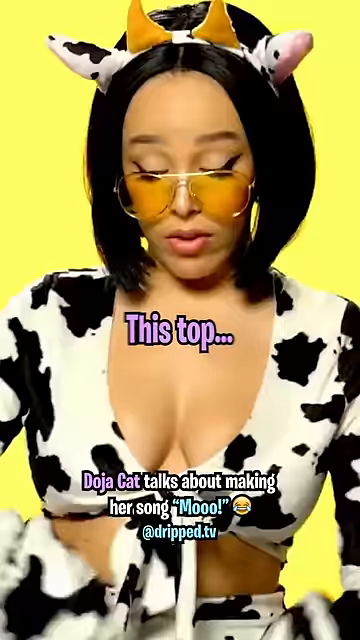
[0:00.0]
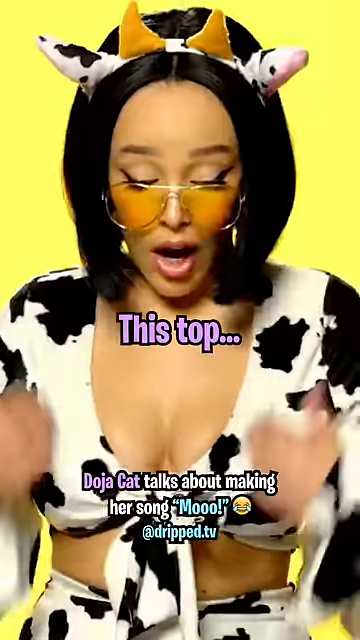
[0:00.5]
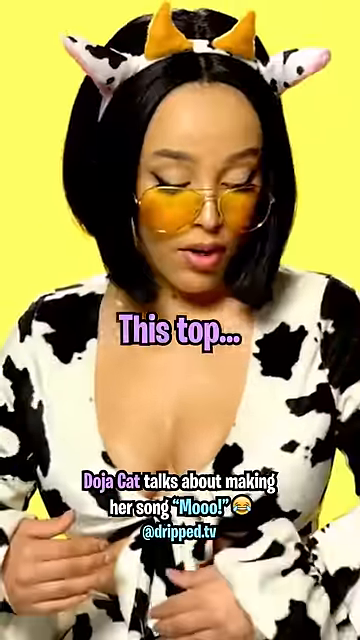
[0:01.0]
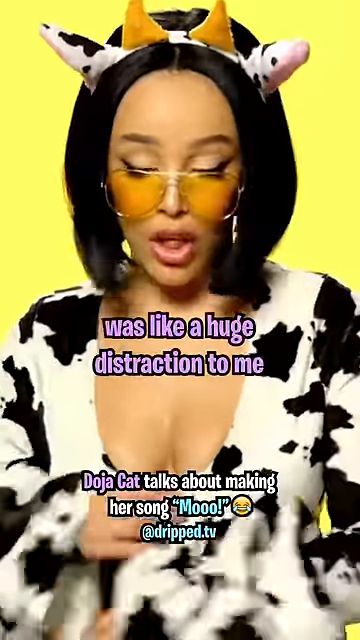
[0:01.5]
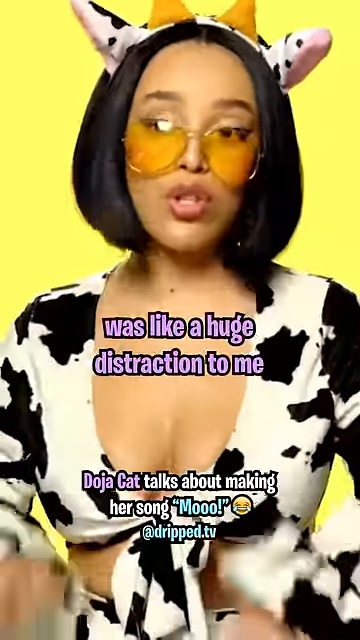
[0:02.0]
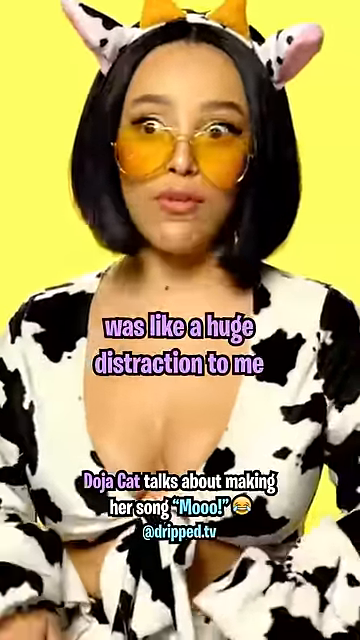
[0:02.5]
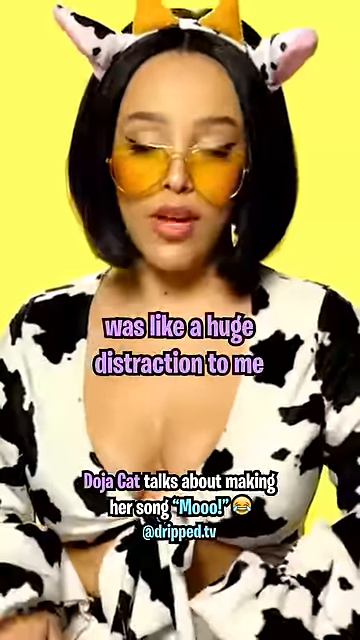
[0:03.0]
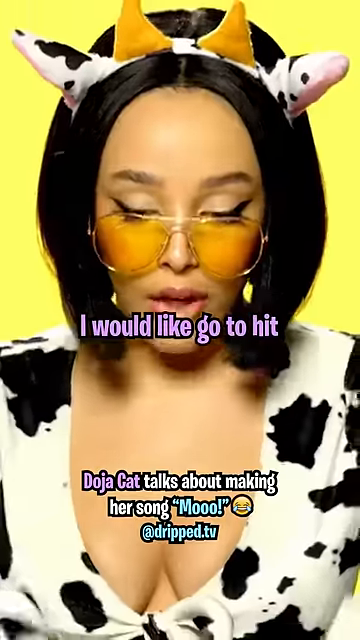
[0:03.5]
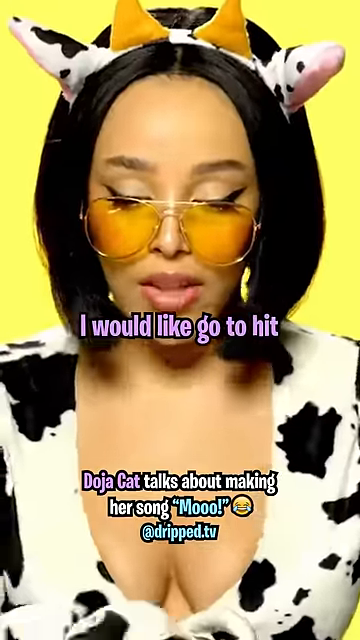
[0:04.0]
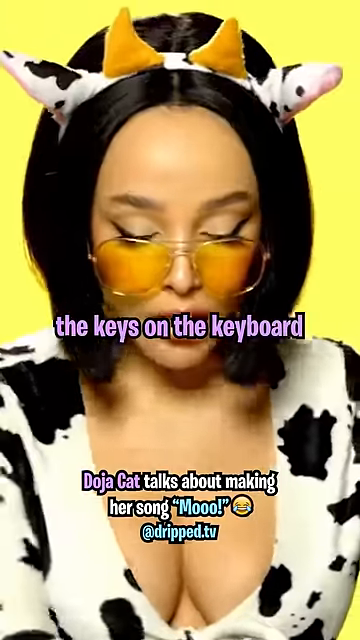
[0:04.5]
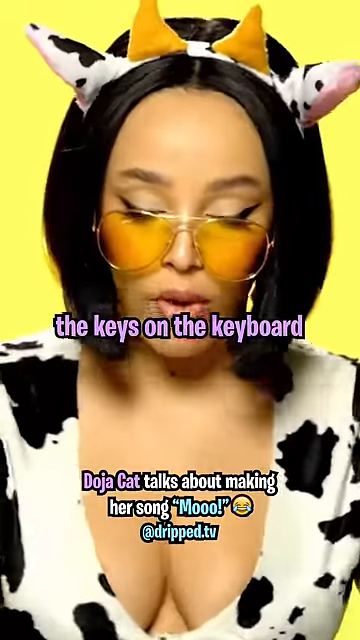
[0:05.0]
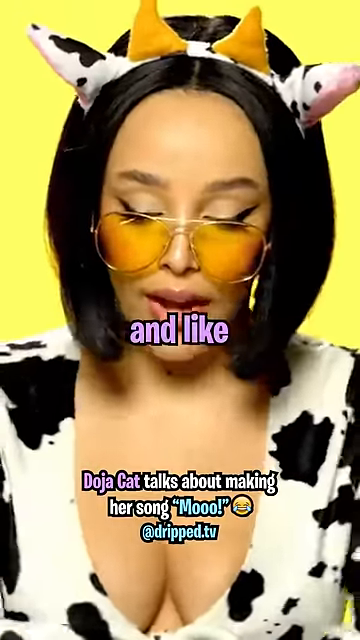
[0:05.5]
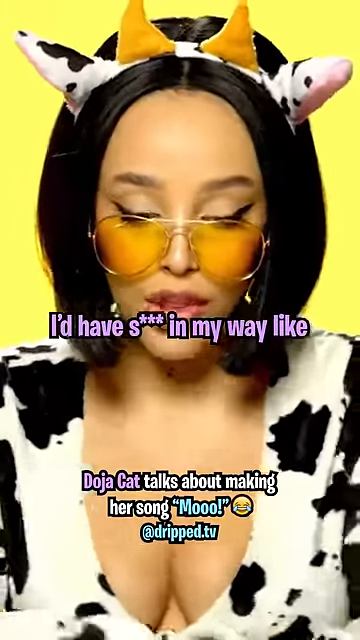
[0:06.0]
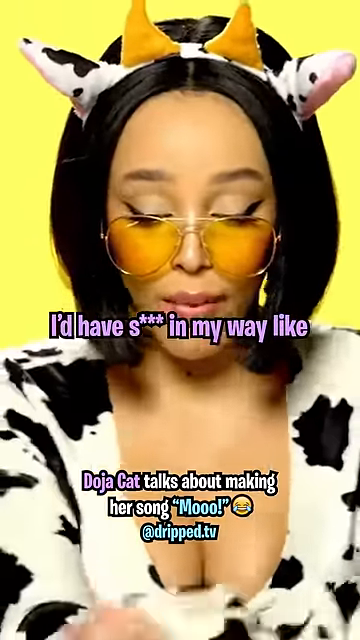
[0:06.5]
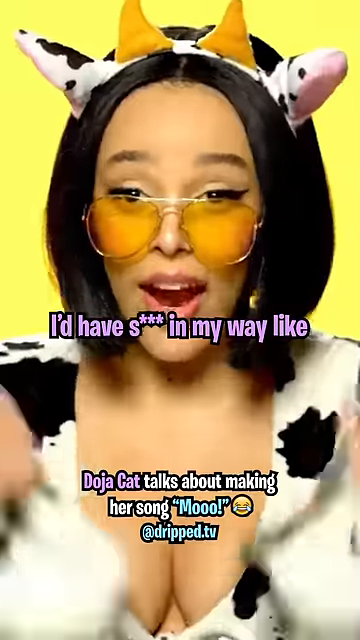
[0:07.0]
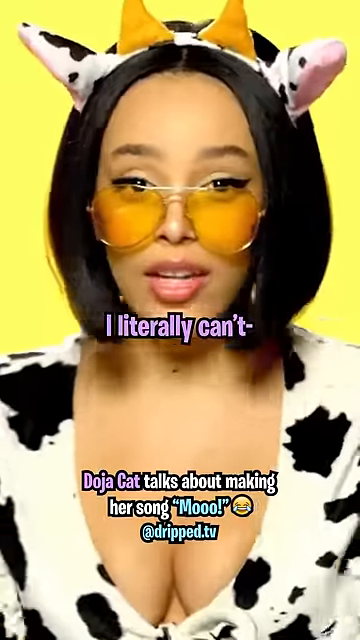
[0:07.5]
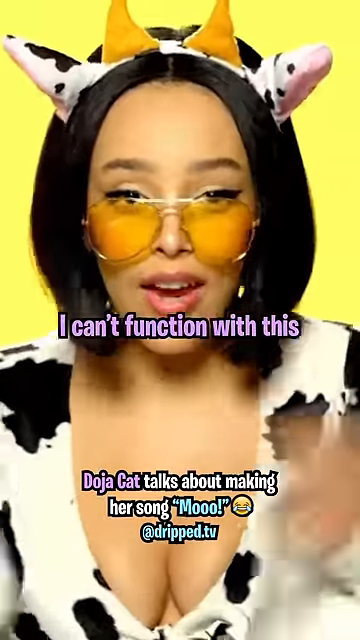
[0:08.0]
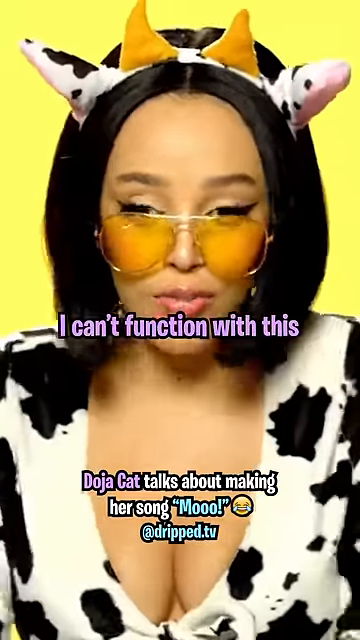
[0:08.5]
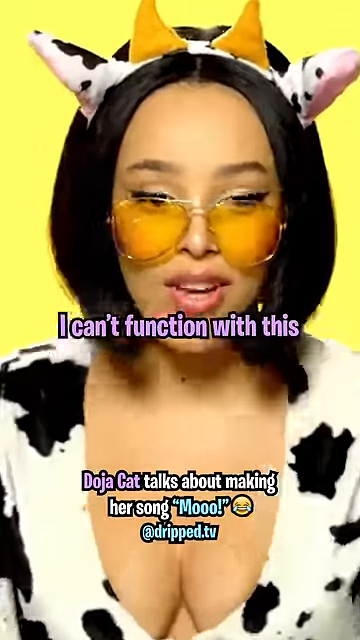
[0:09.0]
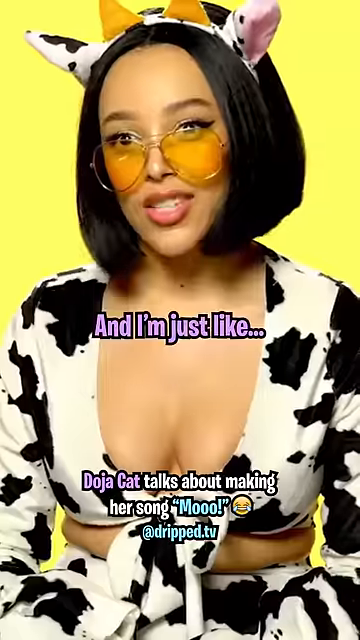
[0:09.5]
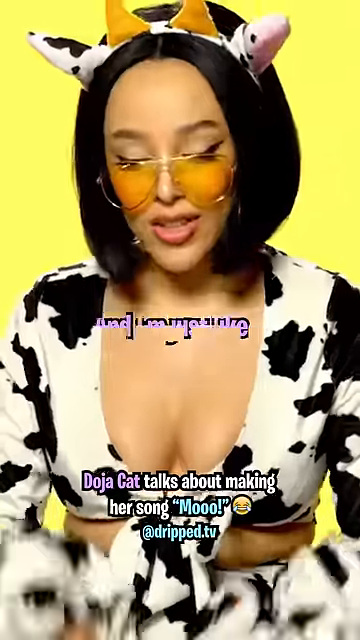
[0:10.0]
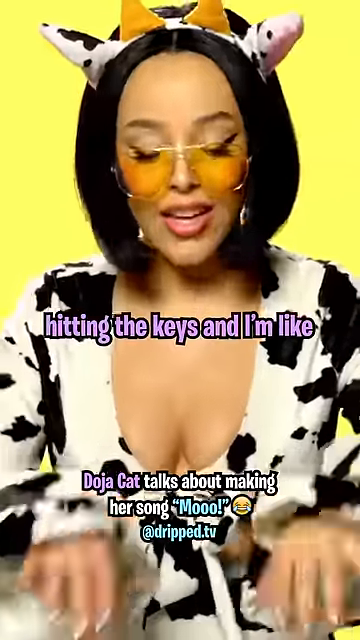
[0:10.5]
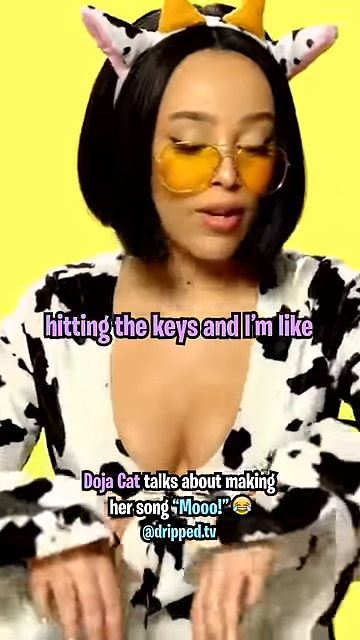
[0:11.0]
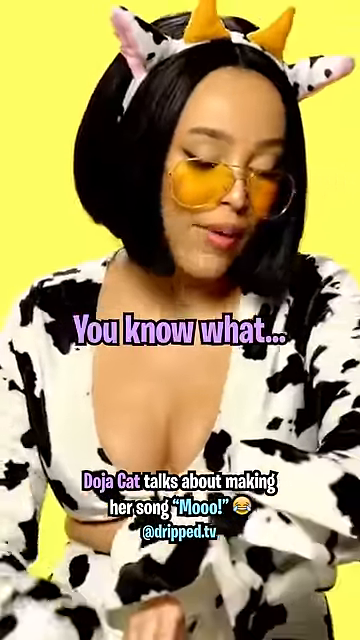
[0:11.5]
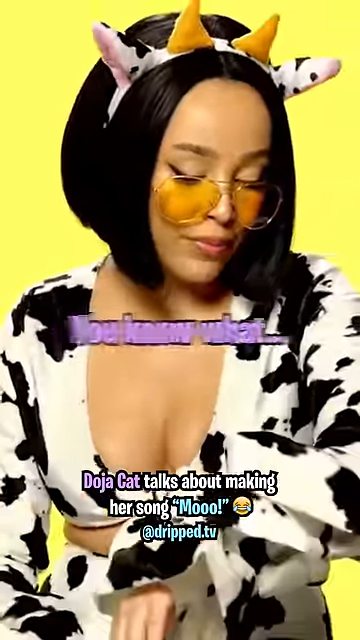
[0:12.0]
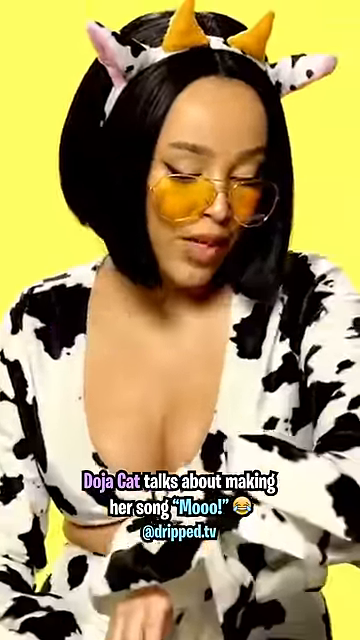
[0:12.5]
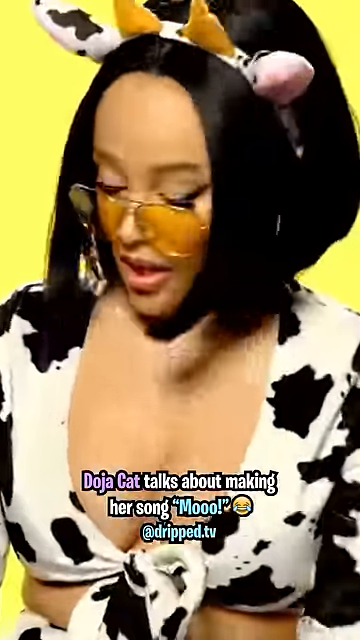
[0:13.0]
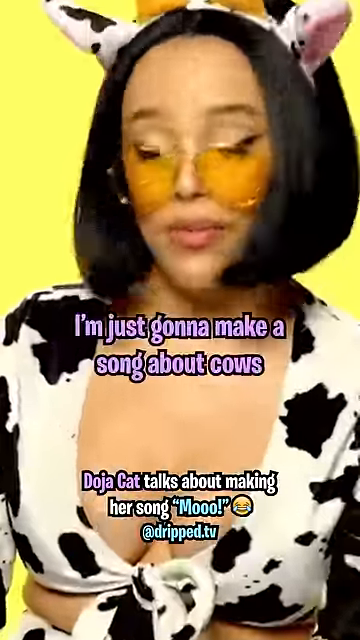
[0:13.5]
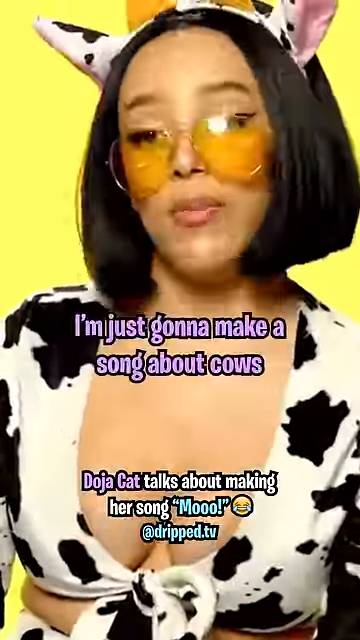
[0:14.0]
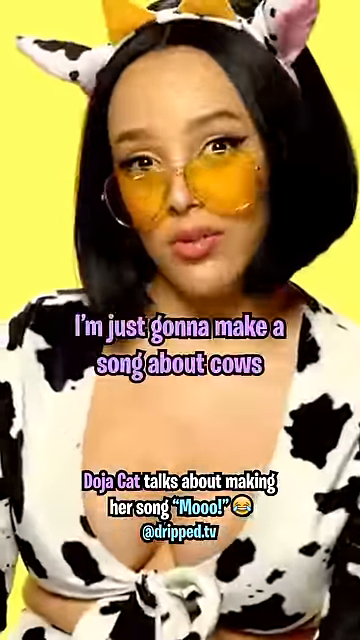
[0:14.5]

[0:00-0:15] Doja Cat is the only person featured in the video. She wears an outfit that represents a cow and talks constantly, very animated as she speaks. The setting is probably a yellow background, and subtitles run along the video.